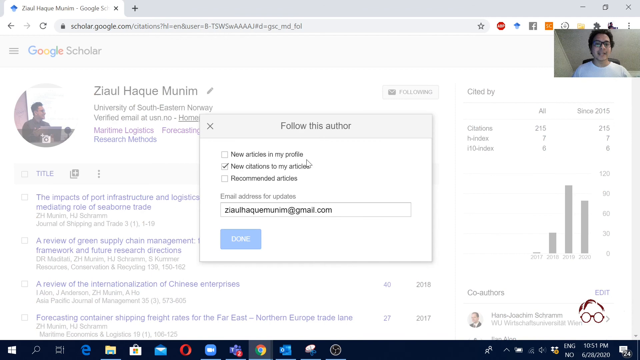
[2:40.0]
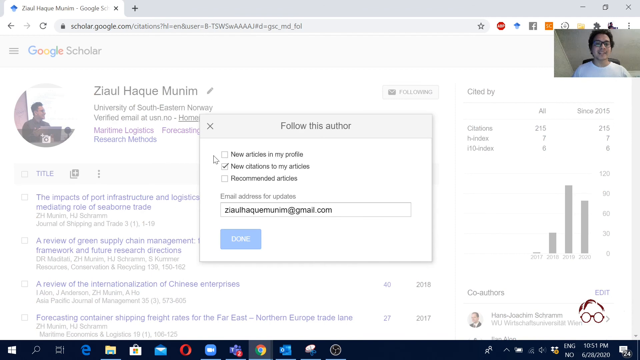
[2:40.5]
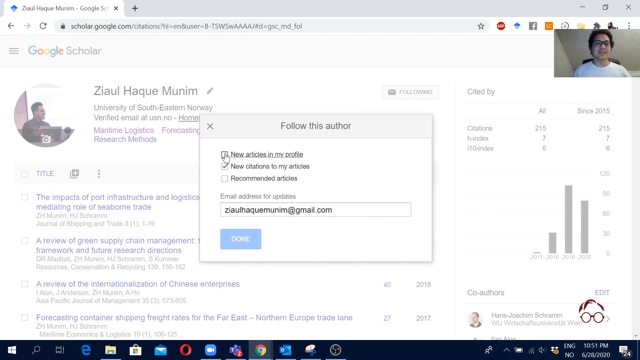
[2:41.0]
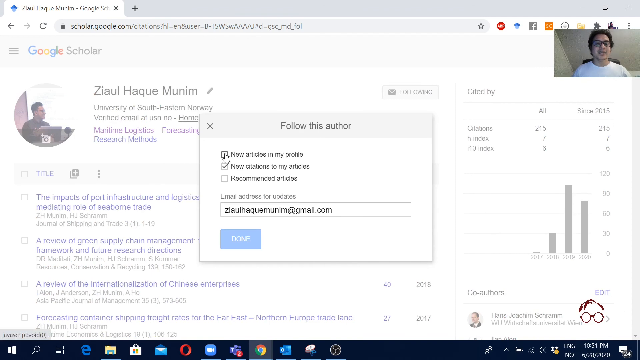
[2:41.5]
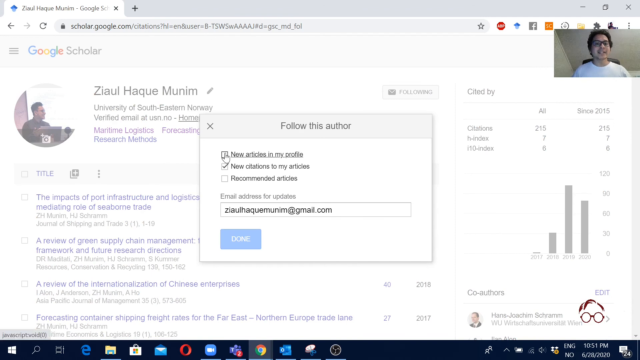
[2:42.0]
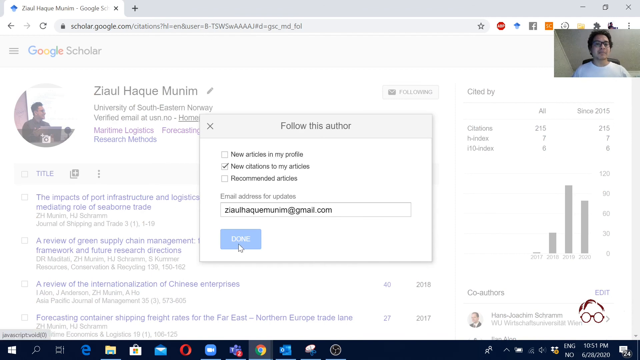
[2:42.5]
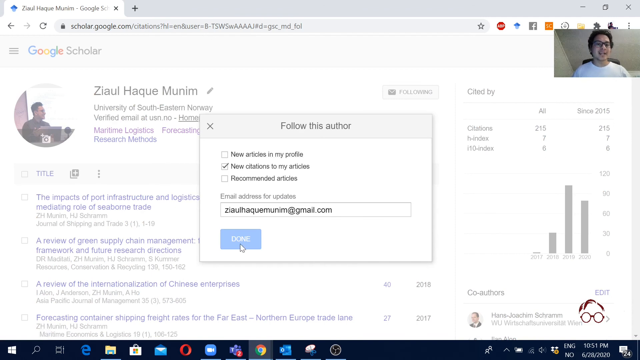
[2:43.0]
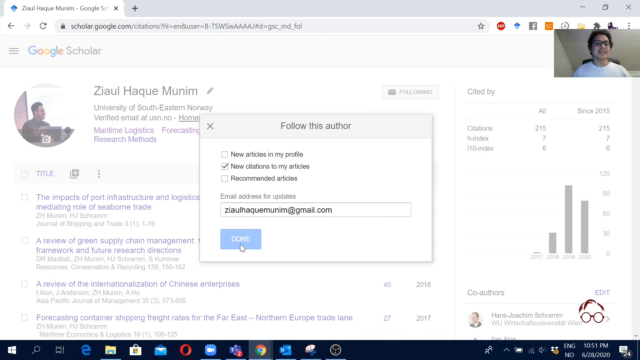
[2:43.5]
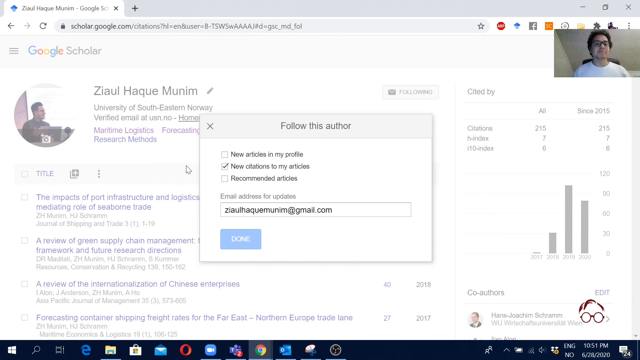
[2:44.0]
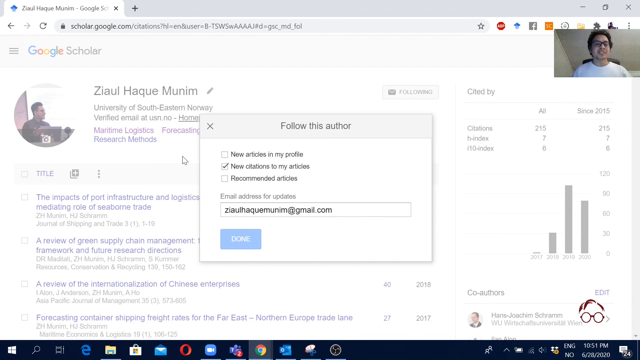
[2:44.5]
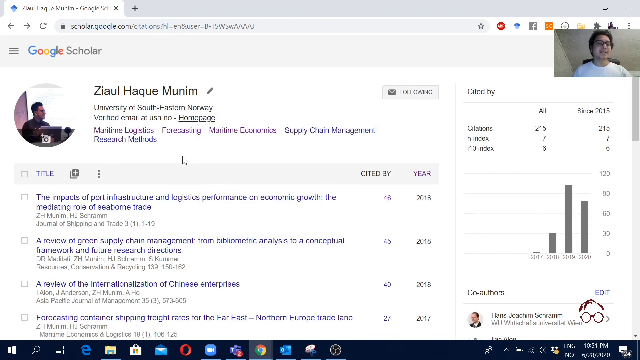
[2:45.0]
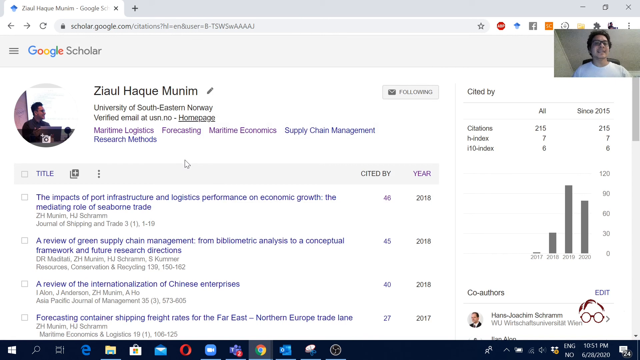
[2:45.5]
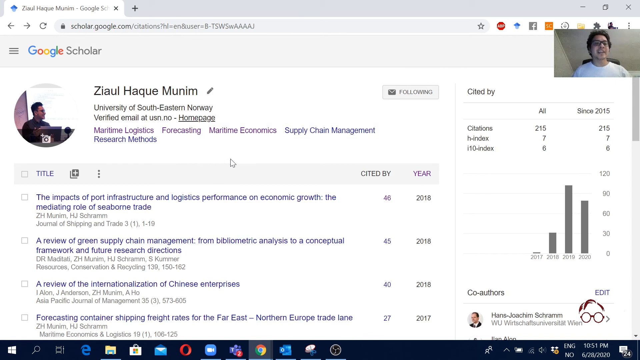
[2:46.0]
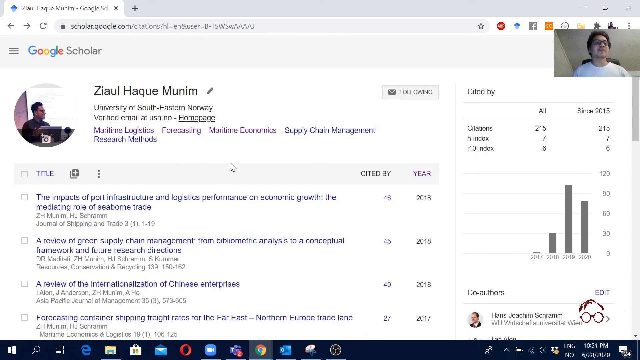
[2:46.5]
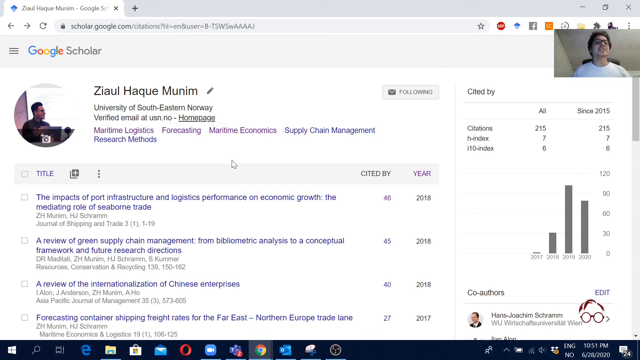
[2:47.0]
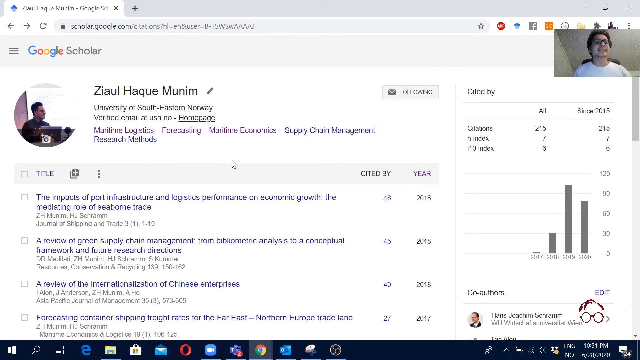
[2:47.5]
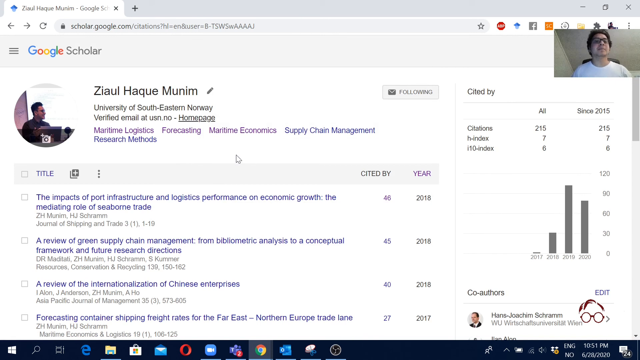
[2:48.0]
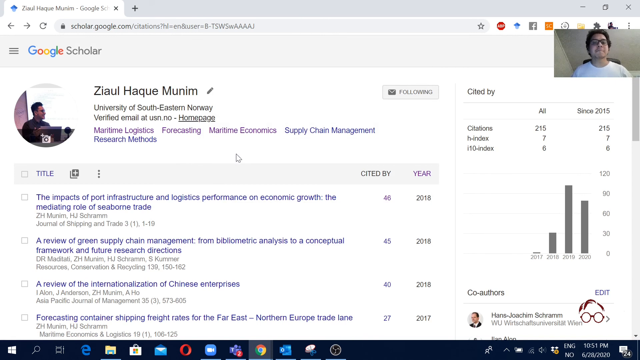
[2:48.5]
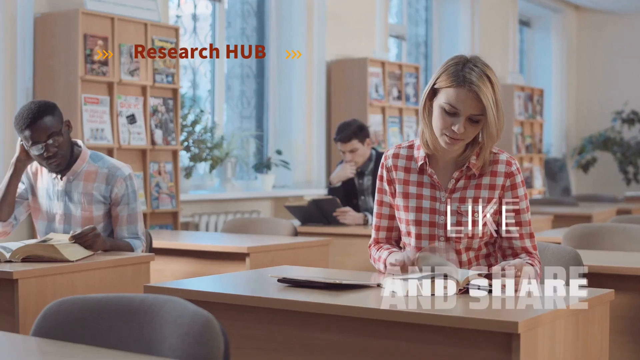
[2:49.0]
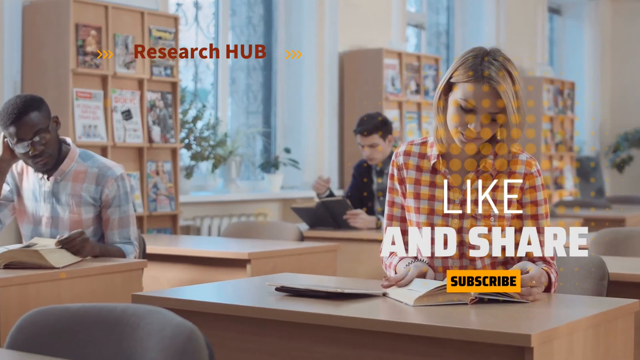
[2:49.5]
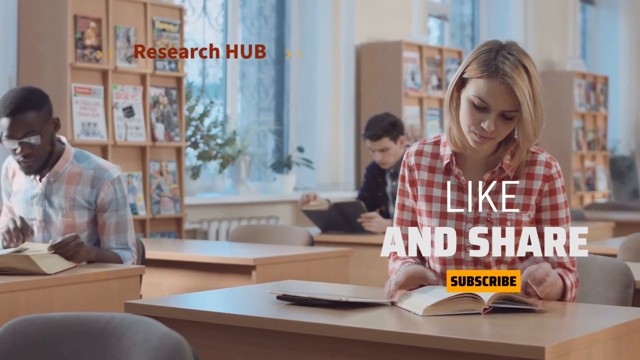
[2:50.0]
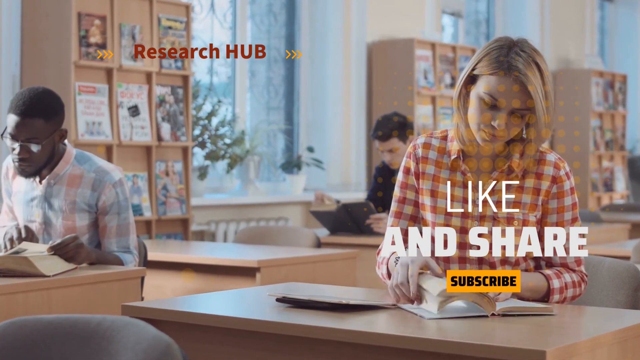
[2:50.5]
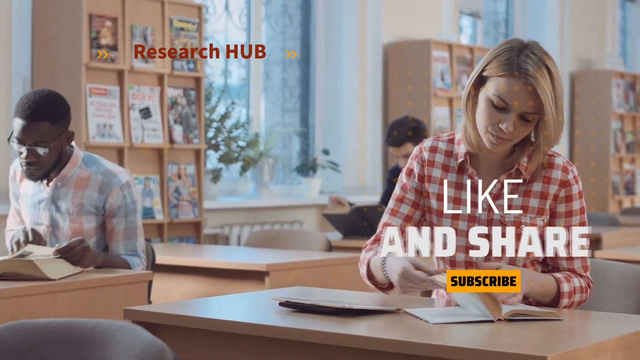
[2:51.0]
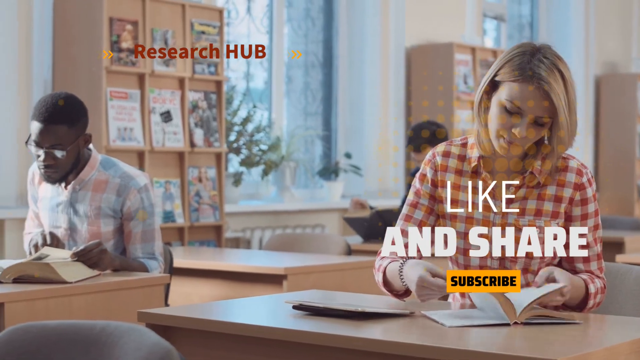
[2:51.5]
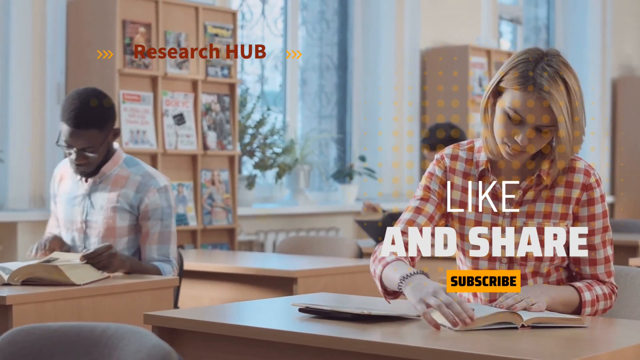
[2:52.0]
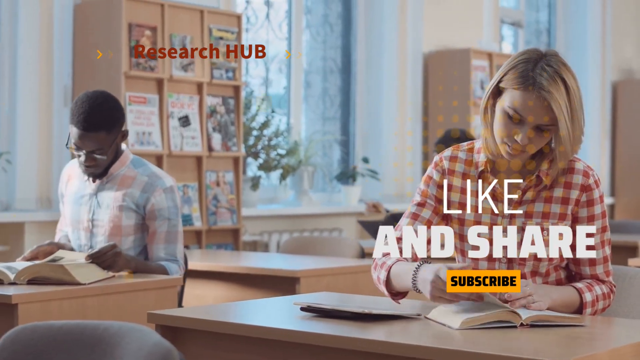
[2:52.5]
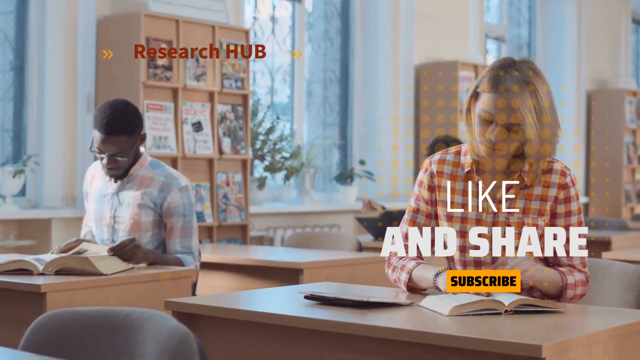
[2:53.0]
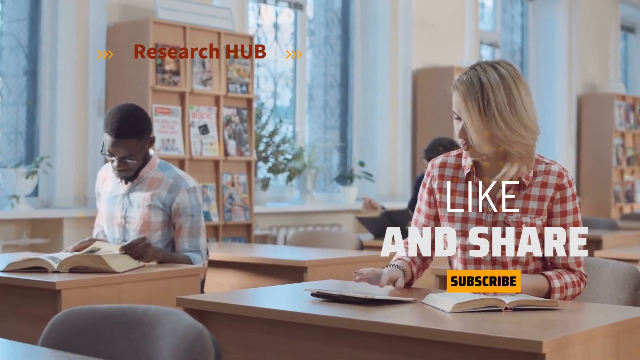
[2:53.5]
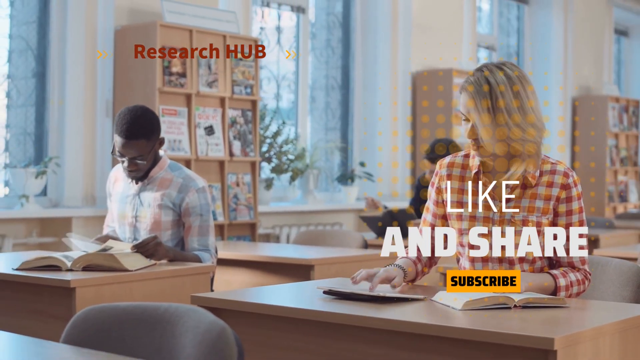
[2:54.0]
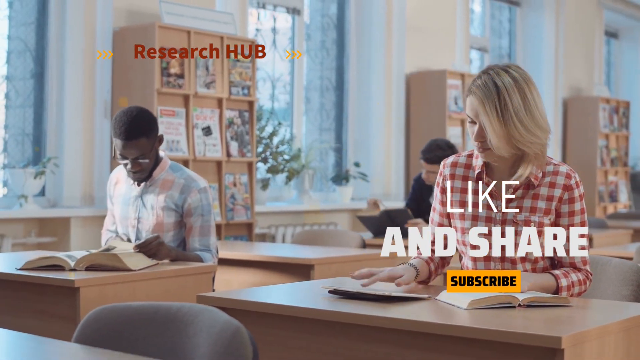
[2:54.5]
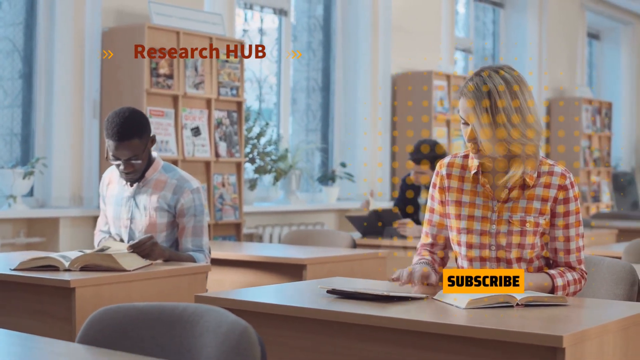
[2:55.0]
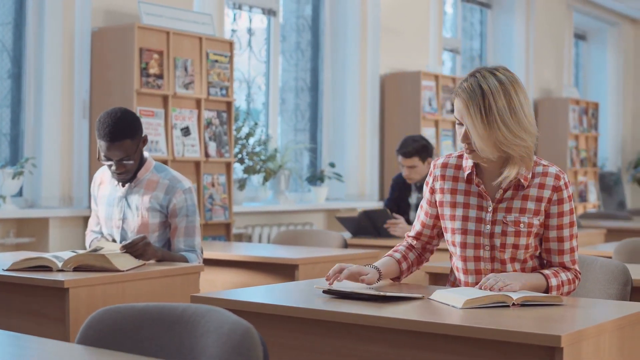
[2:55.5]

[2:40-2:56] The man in the upper right-hand corner clicks the box away, and the view quickly switches to something like an advertisement: a running video with "research hub" in the upper left corner, while the lower right corner says "like and share" and "subscribe" in black print on a yellow rectangle. The scene is maybe at a library, where people are doing research with books out. A woman with blonde hair, wearing a plaid button-down blouse, looks like she is maybe typing or using something like a large calculator. Two other men are in the room: an African American man to her left, and further back behind her, also to her left, a man with dark hair who looks like he could be Caucasian.